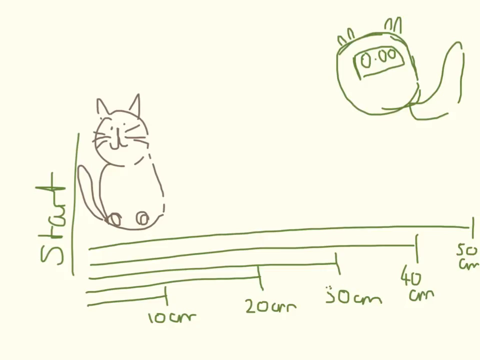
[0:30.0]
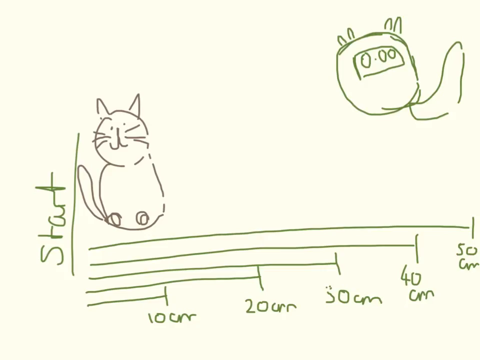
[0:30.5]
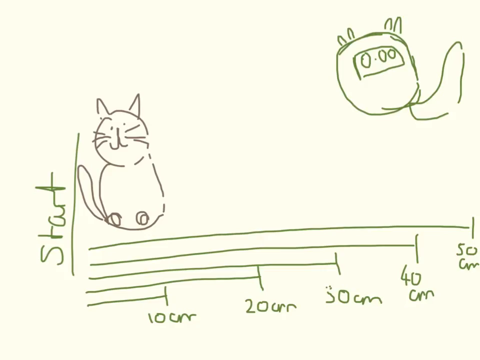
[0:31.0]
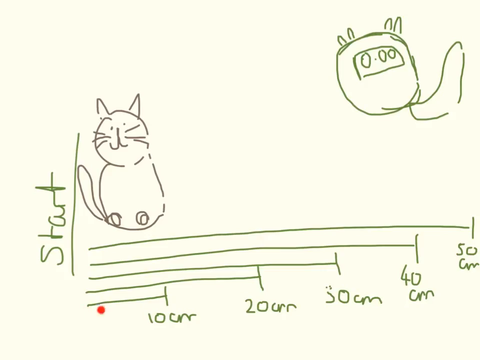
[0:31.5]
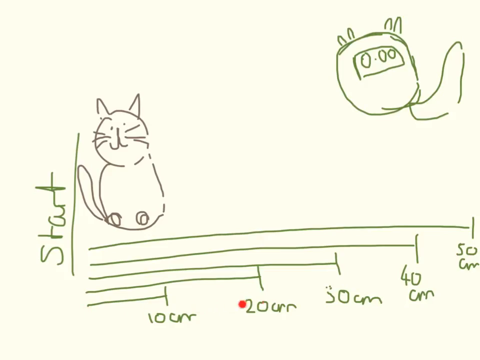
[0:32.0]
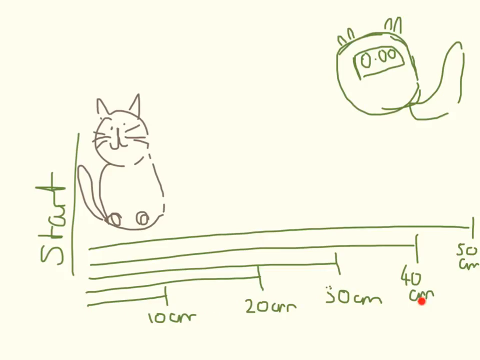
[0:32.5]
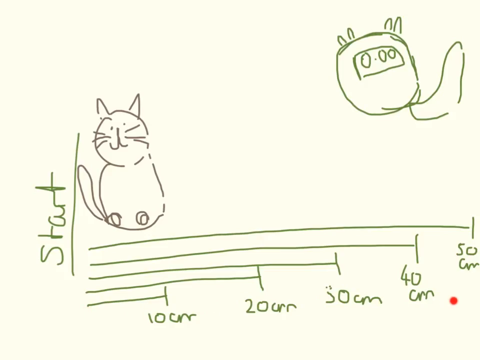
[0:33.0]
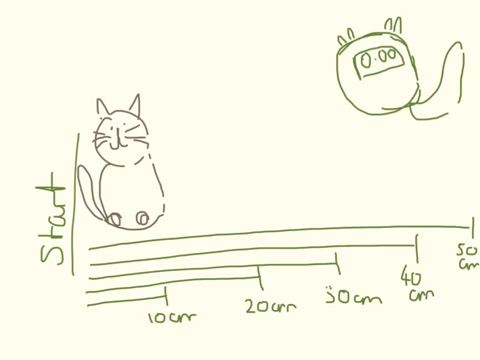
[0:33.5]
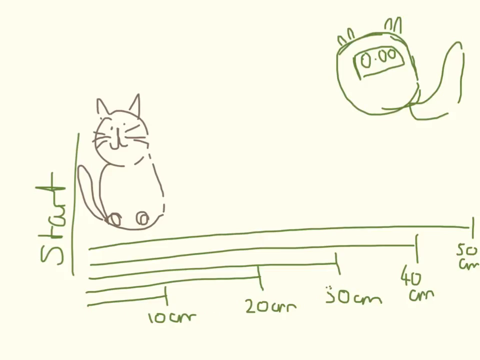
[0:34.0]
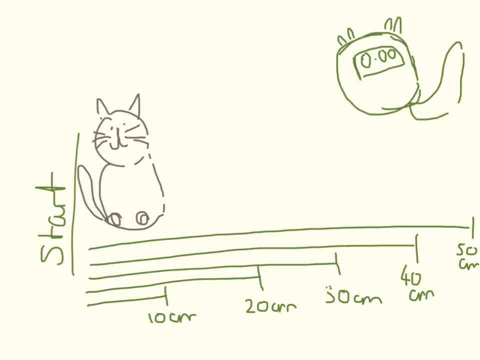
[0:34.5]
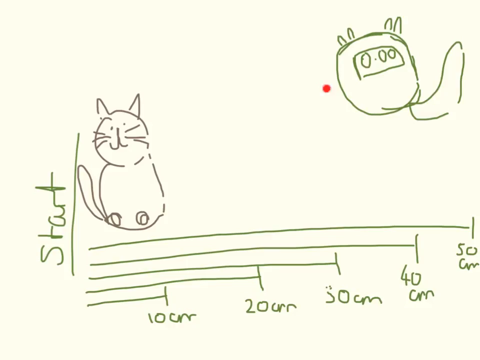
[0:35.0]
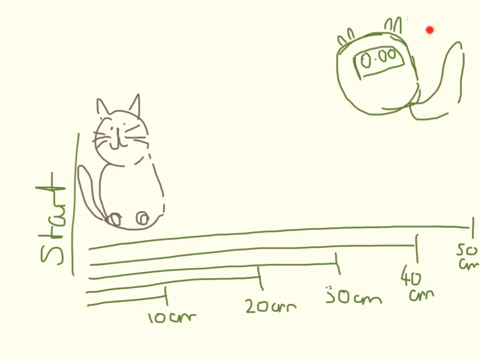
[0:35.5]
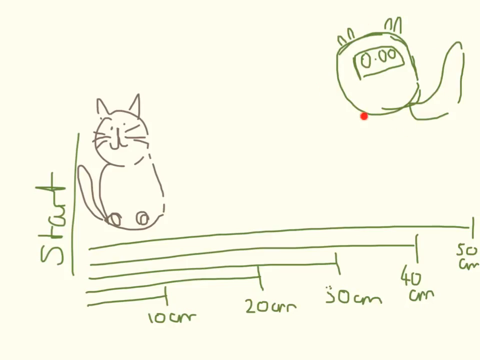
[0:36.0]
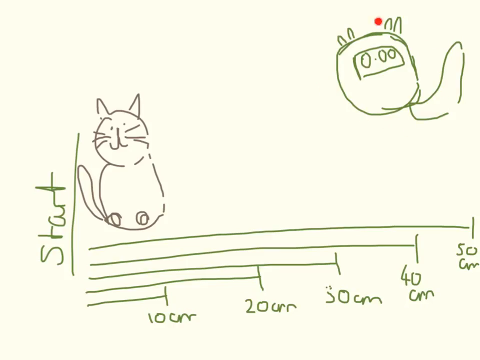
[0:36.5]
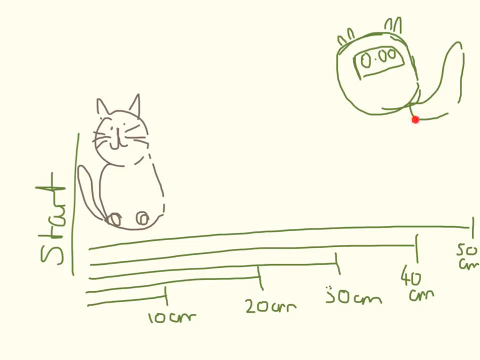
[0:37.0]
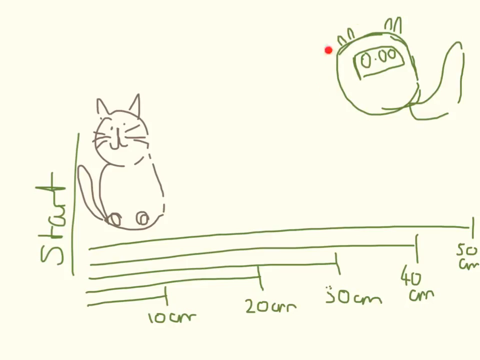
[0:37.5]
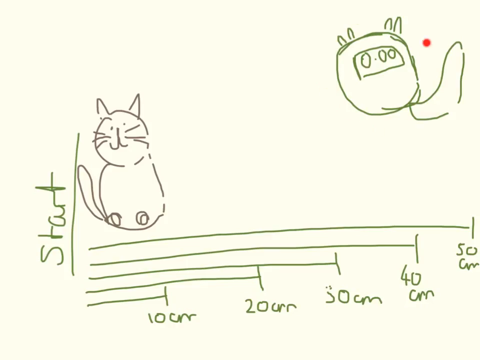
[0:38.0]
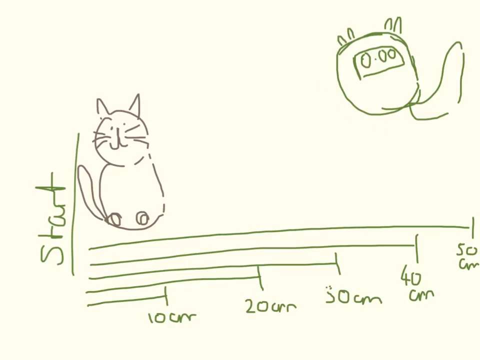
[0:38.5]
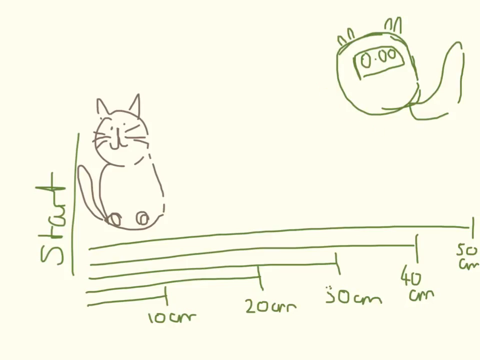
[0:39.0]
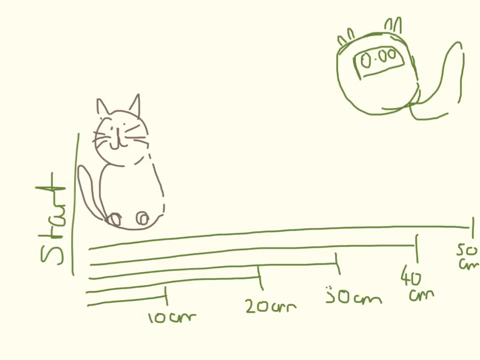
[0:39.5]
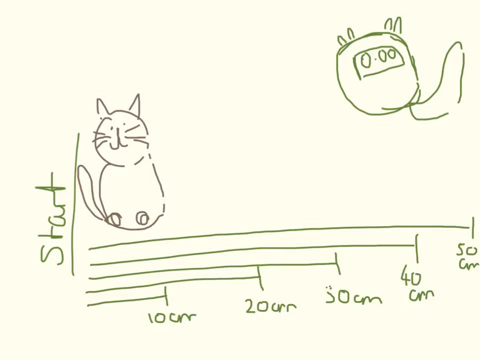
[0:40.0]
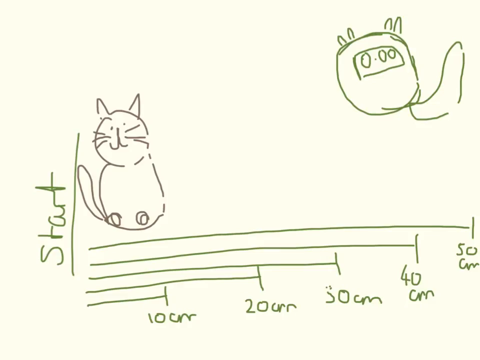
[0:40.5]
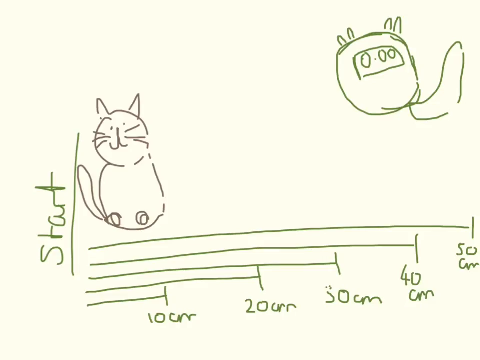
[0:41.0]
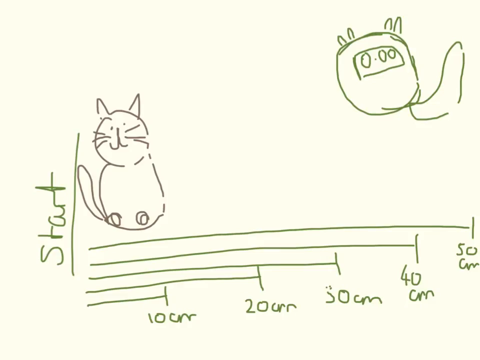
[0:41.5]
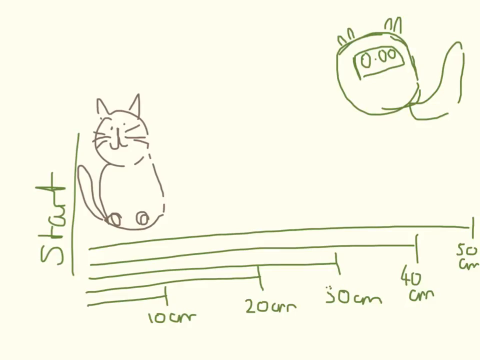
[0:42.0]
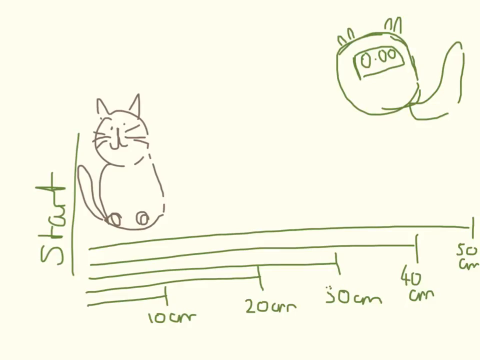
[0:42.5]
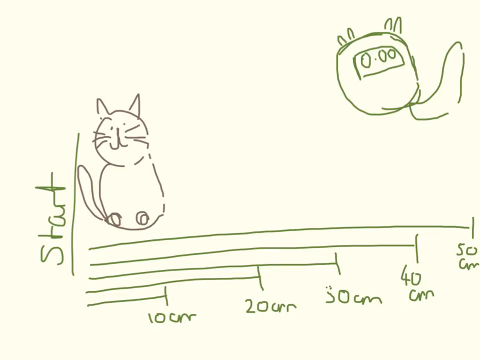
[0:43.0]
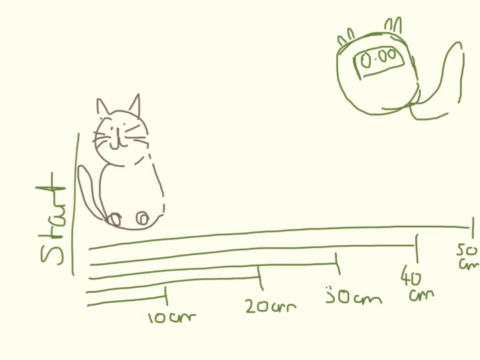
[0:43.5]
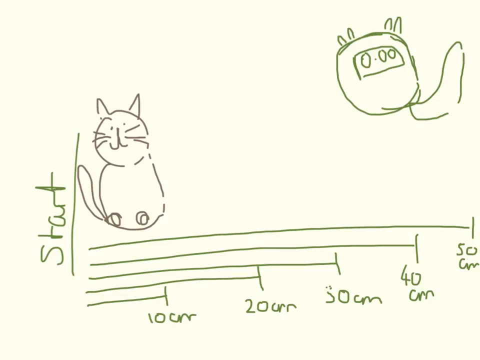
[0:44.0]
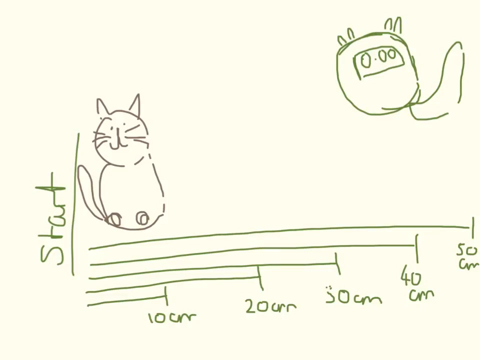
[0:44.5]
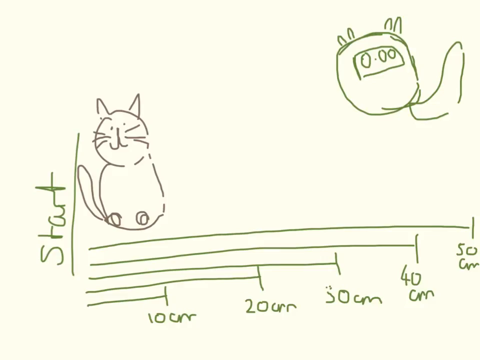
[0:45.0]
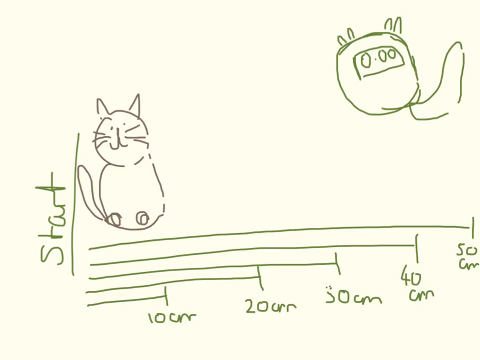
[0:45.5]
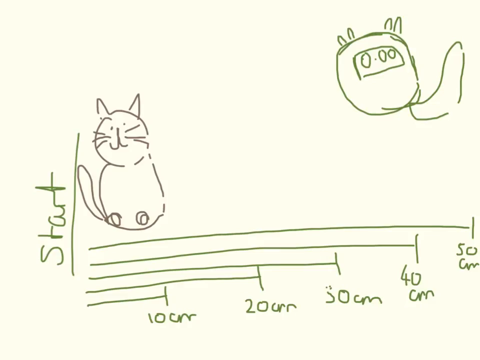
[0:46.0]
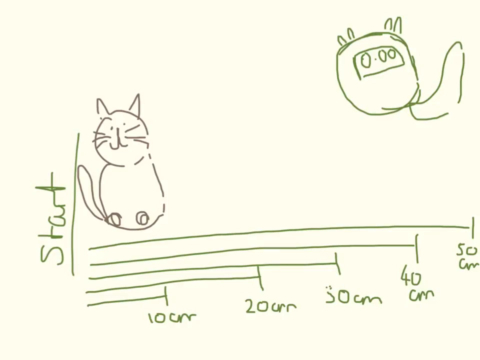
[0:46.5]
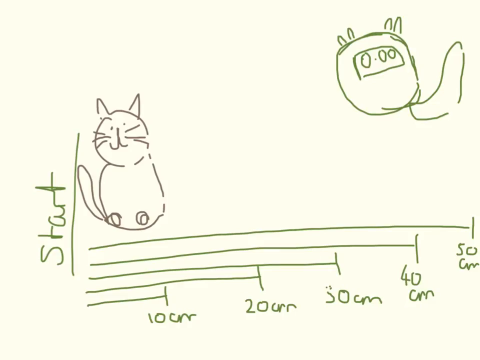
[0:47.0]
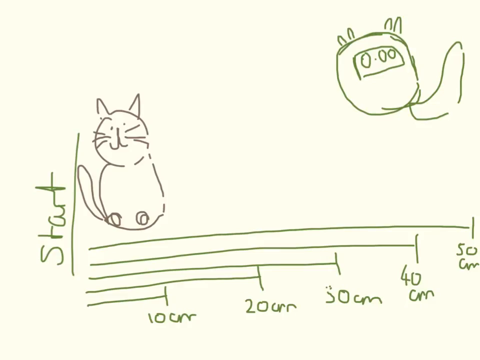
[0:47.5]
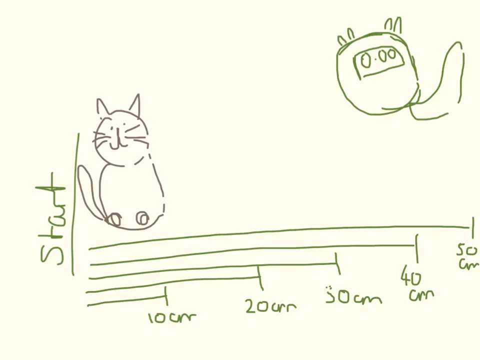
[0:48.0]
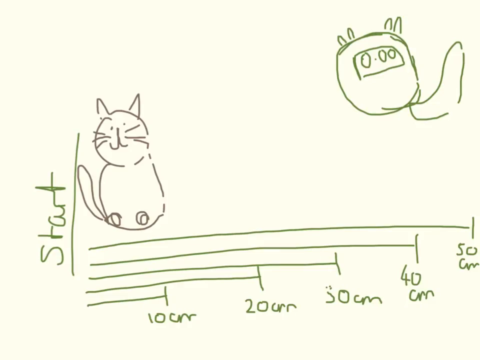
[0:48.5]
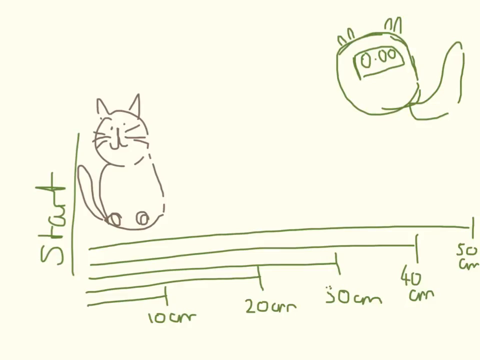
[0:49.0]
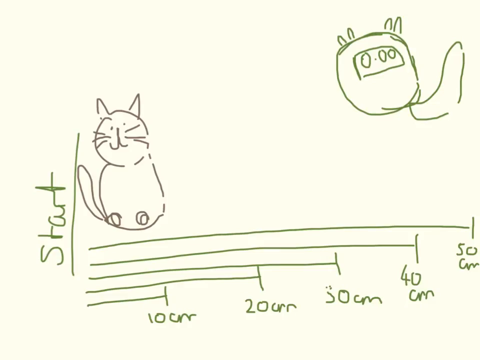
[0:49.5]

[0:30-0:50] A yellow background holds two drawings: a gray cat and, at the top right corner, a green drawing that looks like some kind of circular pod or something with wings and a tail. Green cursive text with a green line under it reads "start," and five green lines are labeled with green text reading "10 centimeters," "20 centimeters," "30 centimeters," "40 centimeters" and "50 centimeters." The mouse, shown as a little red circle, moves across the bottom and then circles around the drawing at the top right corner. The drawings are somewhat sloppy, with quite a few gaps where lines are meant to be, and the text on the left of the cat is in cursive.